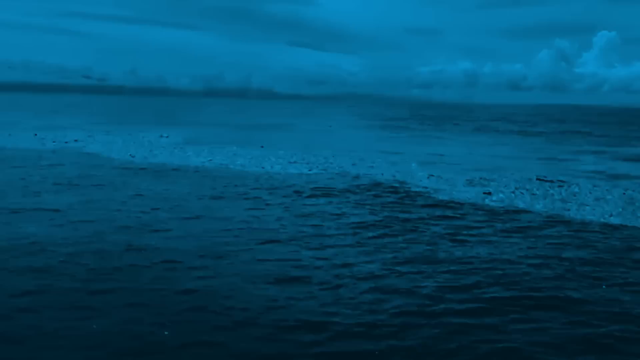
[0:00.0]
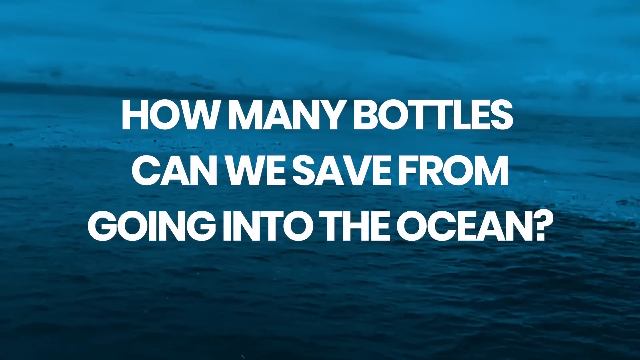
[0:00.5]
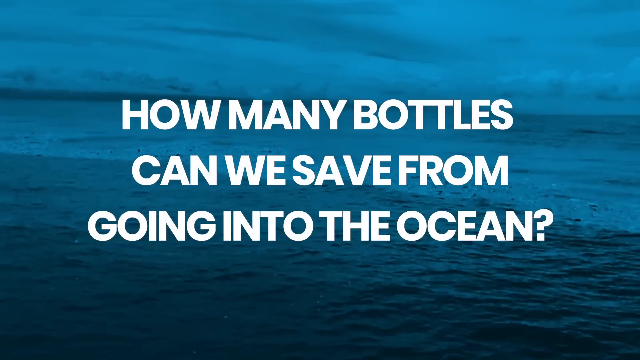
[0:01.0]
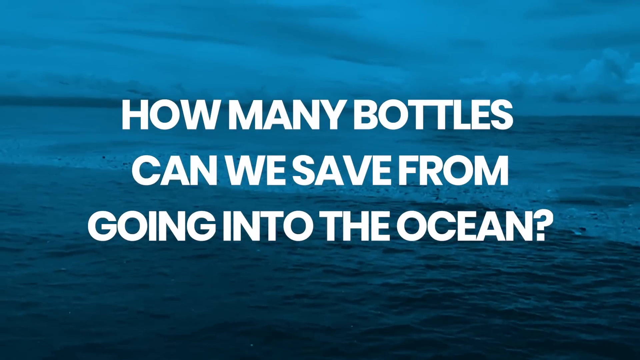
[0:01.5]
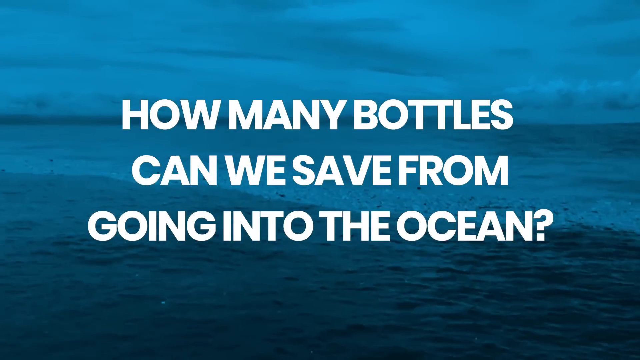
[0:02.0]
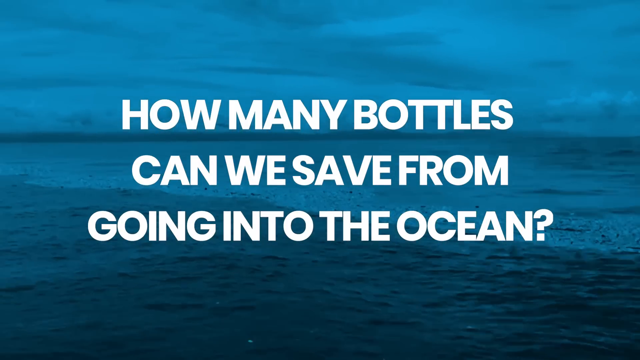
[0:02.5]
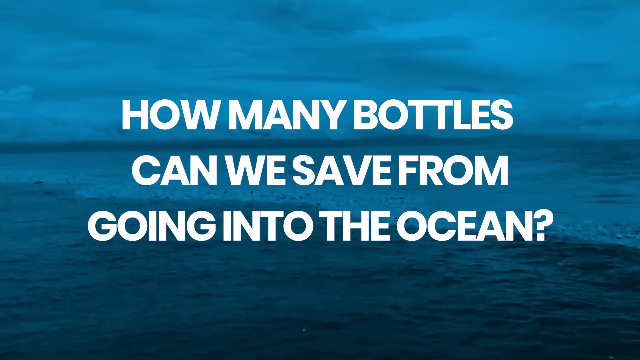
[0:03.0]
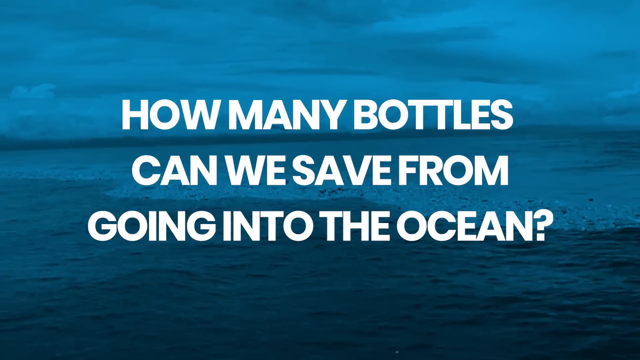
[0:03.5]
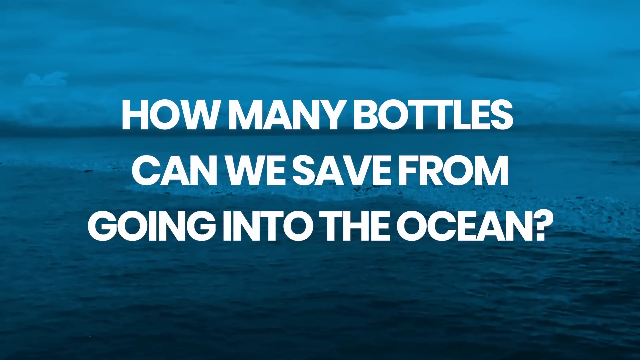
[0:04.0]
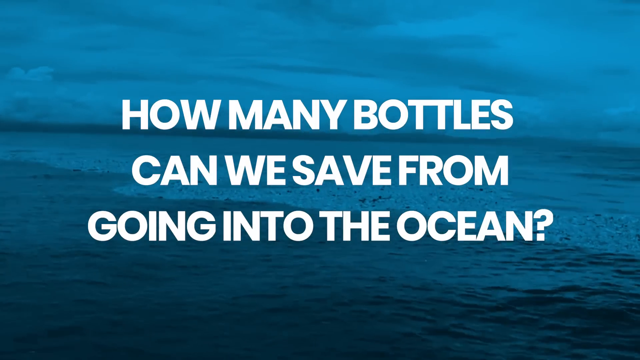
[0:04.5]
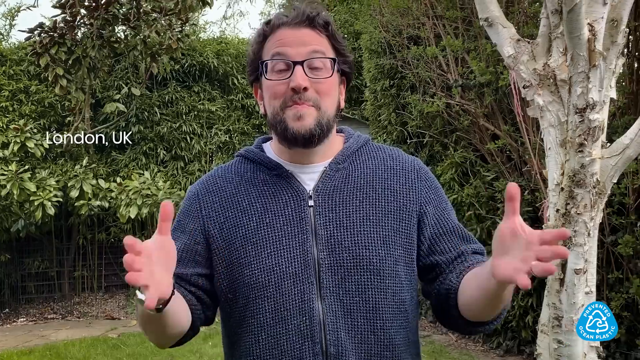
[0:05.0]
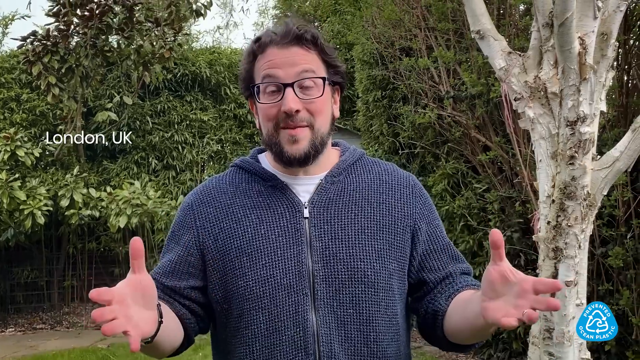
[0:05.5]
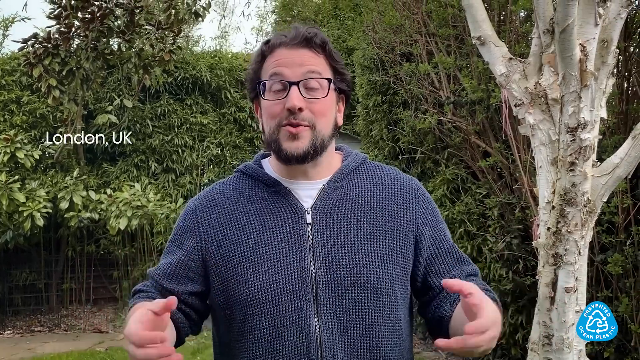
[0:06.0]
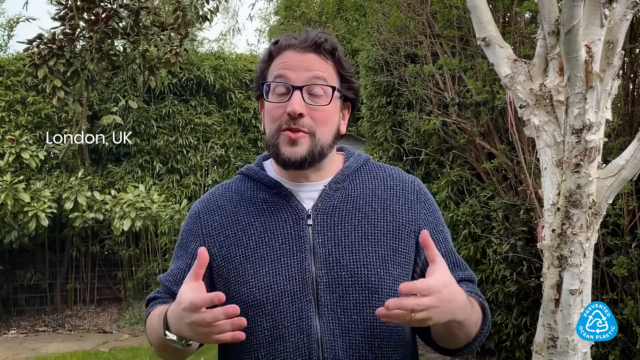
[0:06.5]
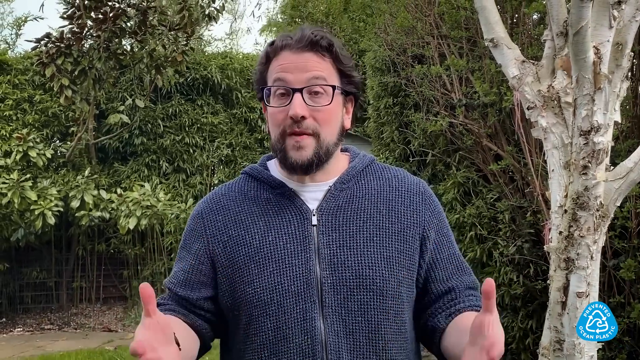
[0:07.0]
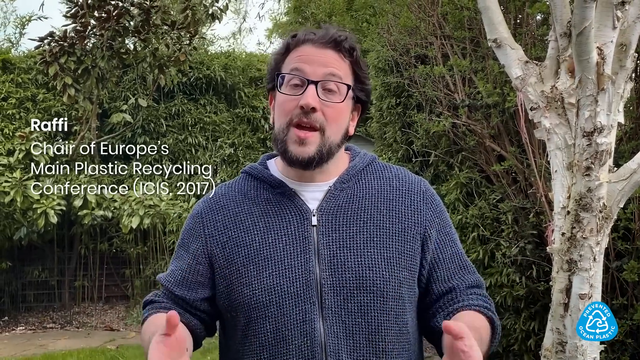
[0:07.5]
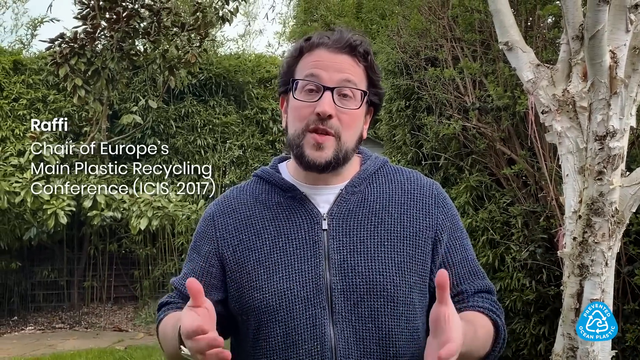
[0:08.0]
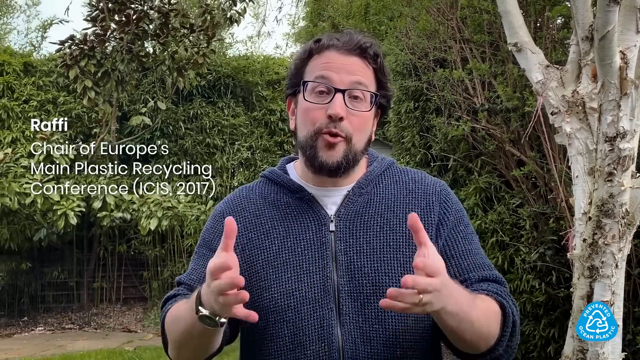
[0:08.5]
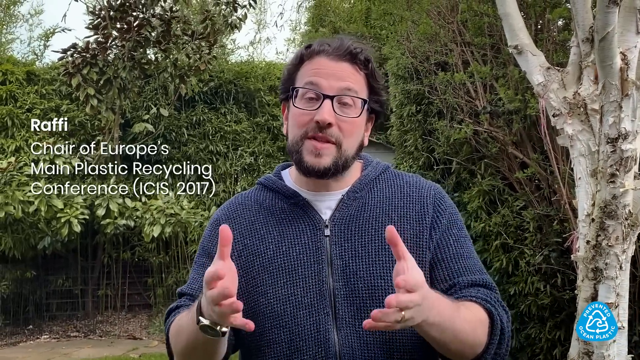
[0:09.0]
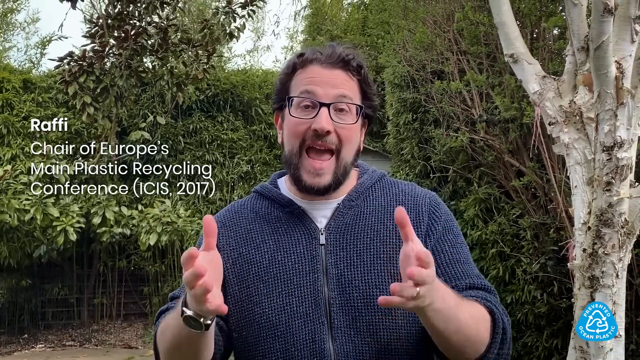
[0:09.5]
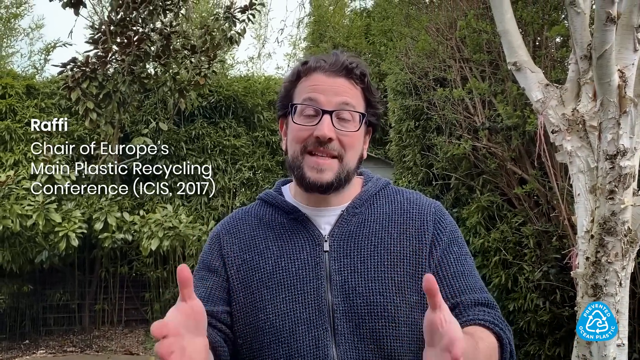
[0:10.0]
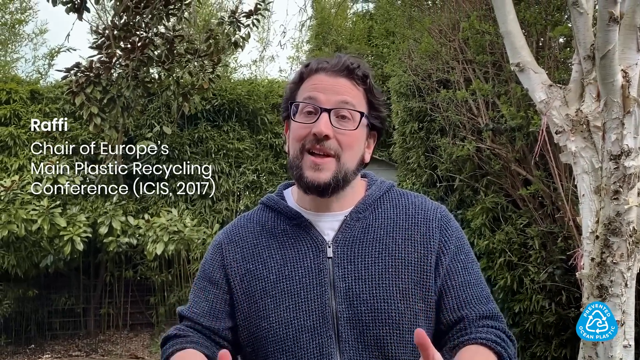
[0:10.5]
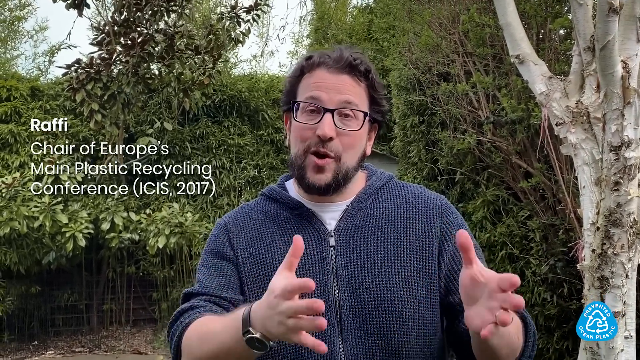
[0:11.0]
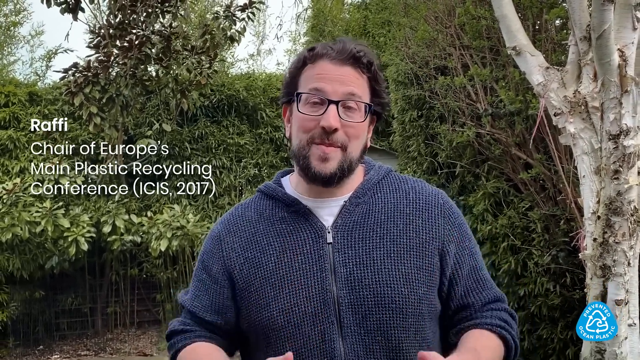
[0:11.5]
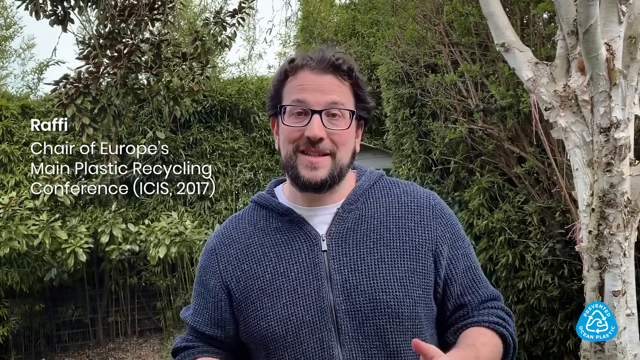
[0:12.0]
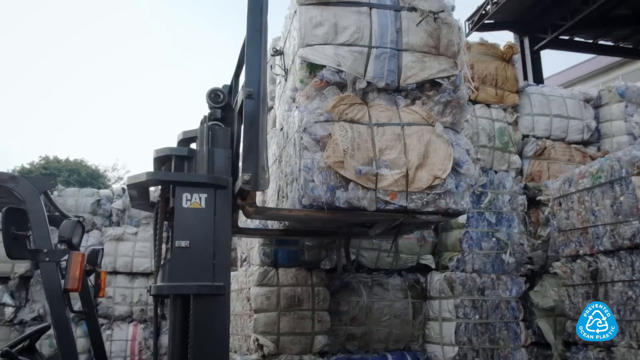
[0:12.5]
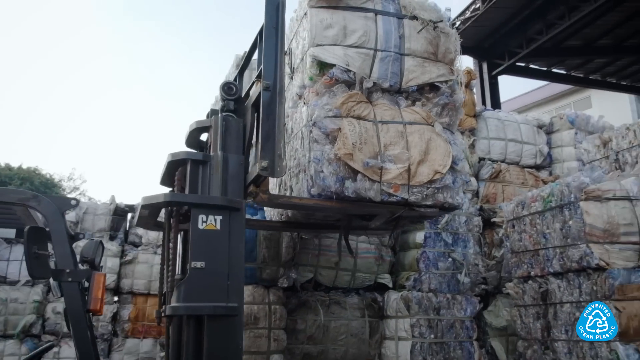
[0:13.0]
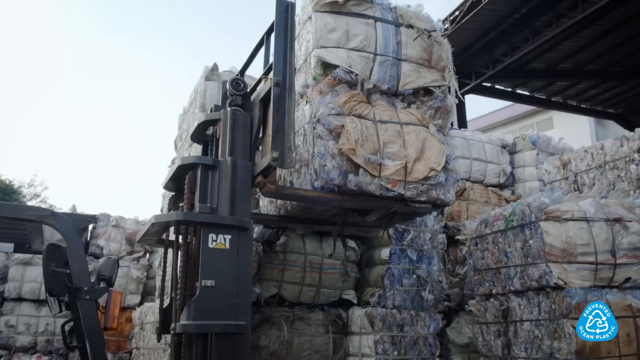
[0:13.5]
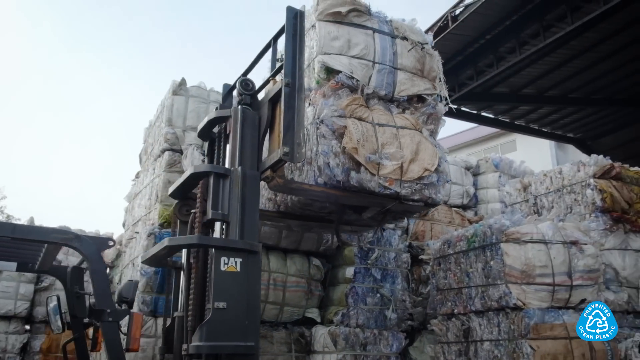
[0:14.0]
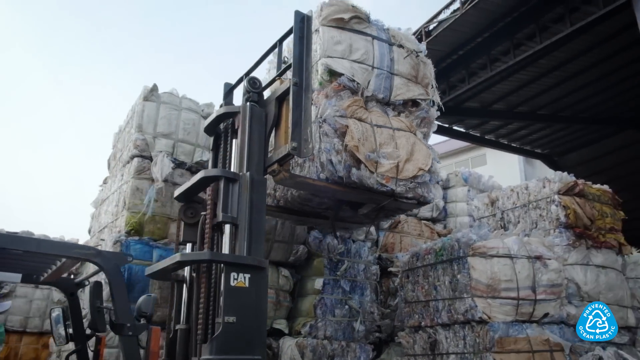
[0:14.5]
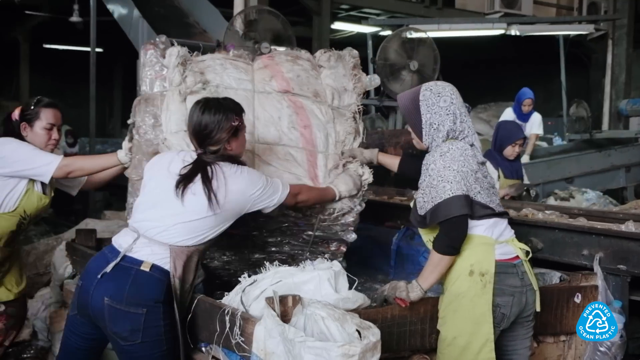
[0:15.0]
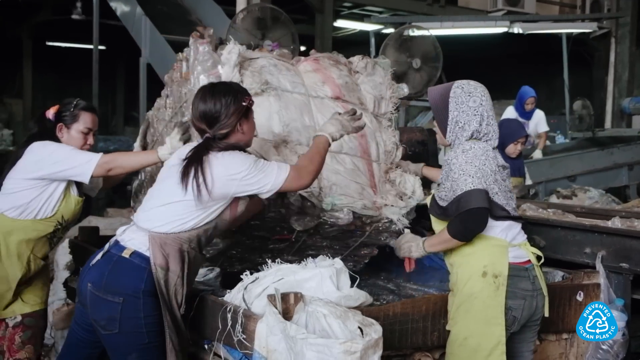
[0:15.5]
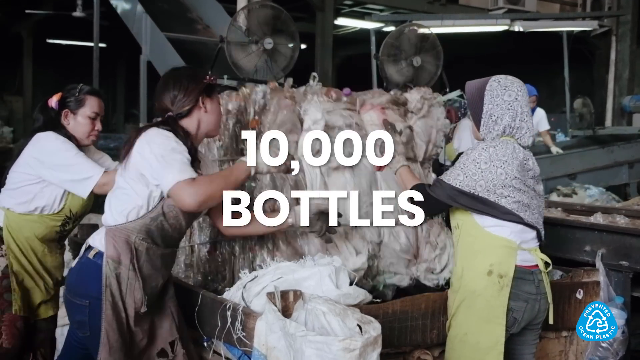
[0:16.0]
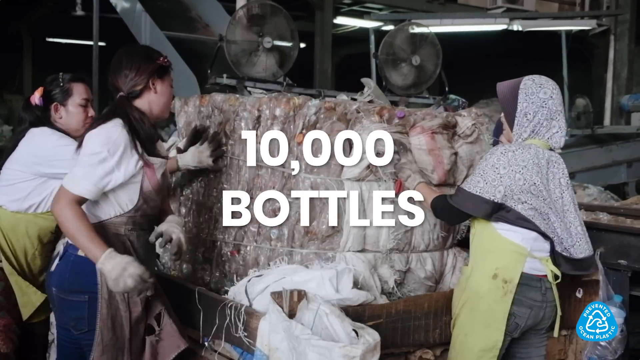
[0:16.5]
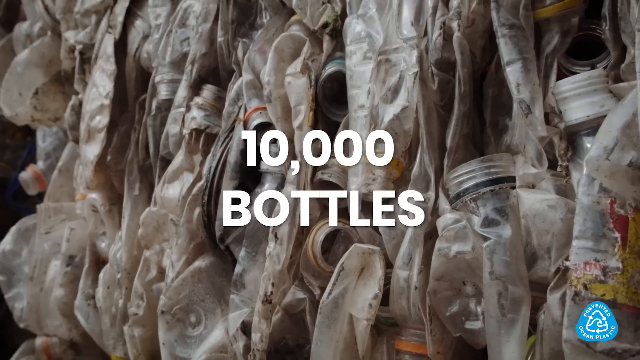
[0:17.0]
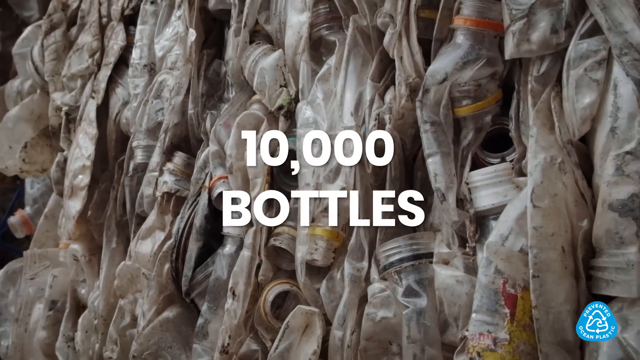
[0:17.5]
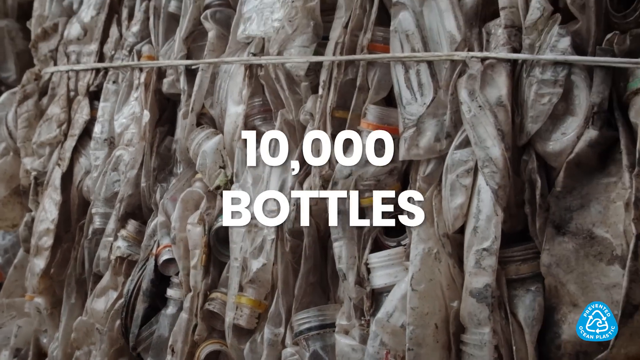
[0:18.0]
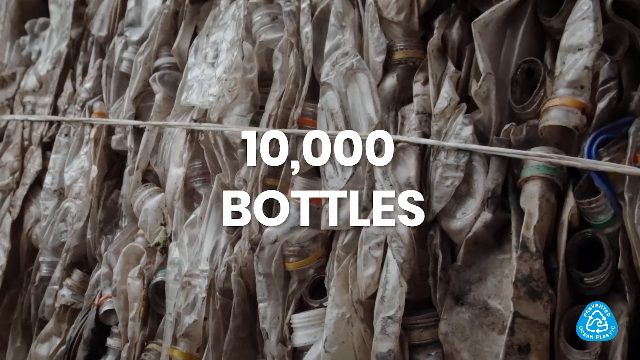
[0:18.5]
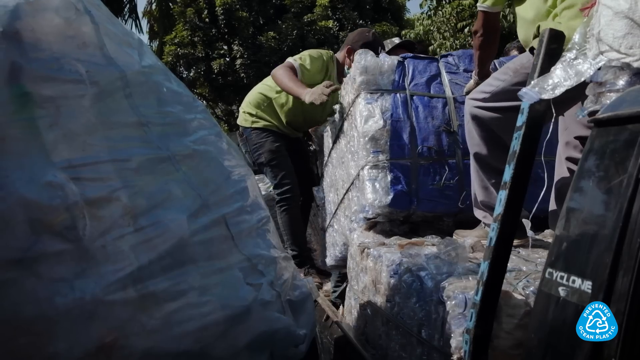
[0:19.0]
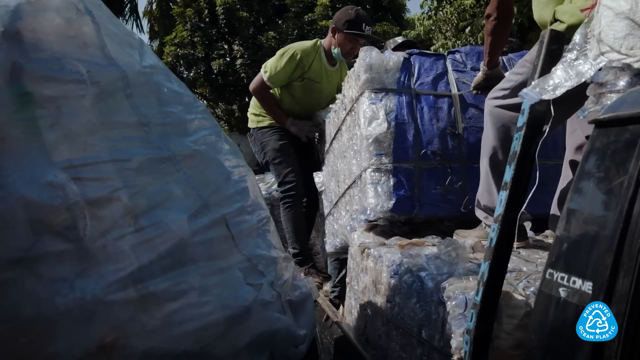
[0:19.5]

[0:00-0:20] The video opens on a body of water that looks like the ocean or a lake, with the on-screen text "how many bottles can we save from going into the ocean?" A gentleman appears with text reading "London, UK," and he starts talking. A big forklift carries bottles into packed compartments while people help. The text "10,000 bottles" appears over bottles that have been compressed into squares, apparently being recycled at a recycling center. The forklift is shown again among hundreds of pallets of square, filled blocks of plastic. Women put the plastics onto some type of conveyor belt; they are wearing what look like white shirts and aprons.